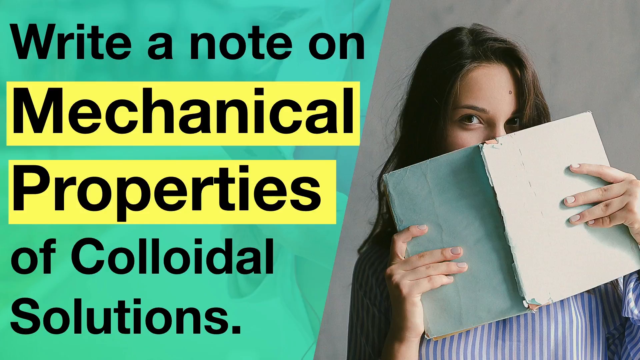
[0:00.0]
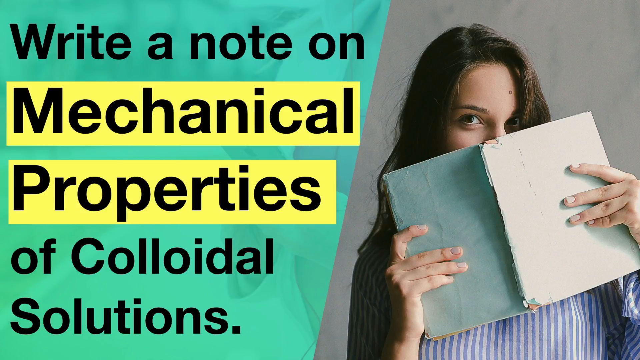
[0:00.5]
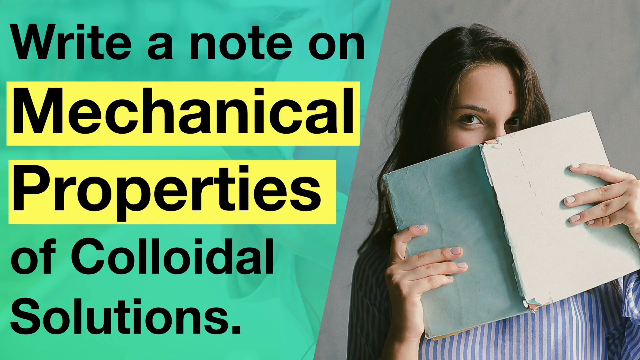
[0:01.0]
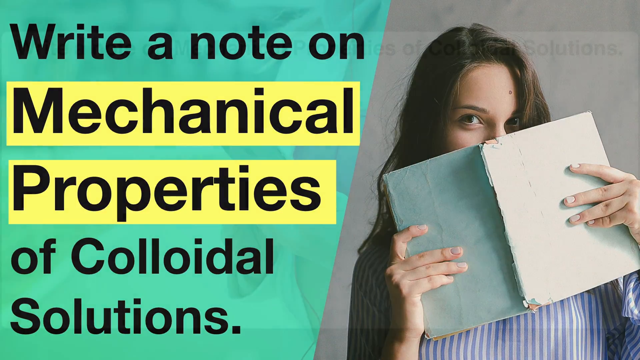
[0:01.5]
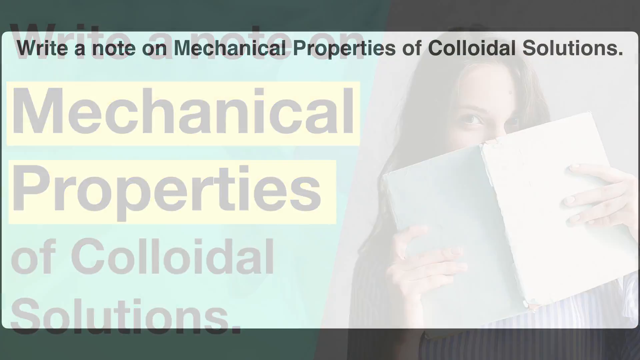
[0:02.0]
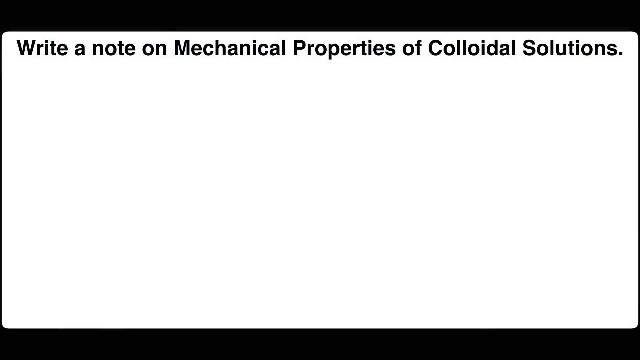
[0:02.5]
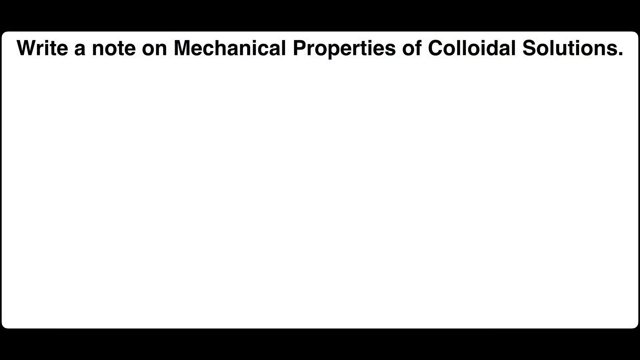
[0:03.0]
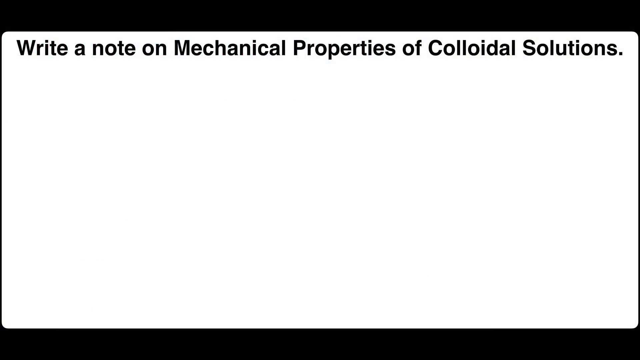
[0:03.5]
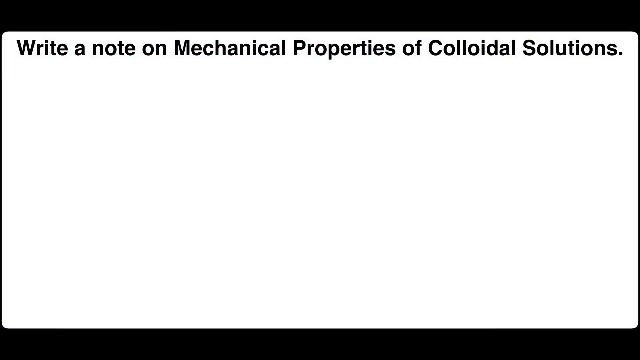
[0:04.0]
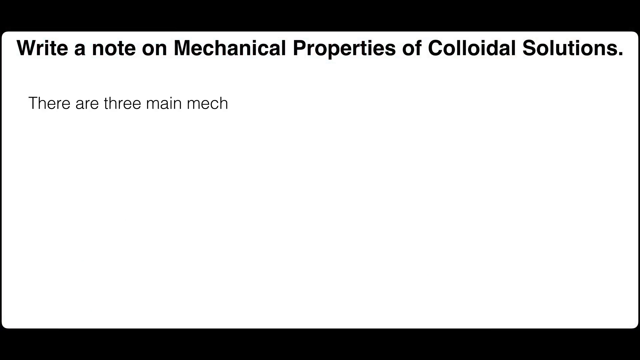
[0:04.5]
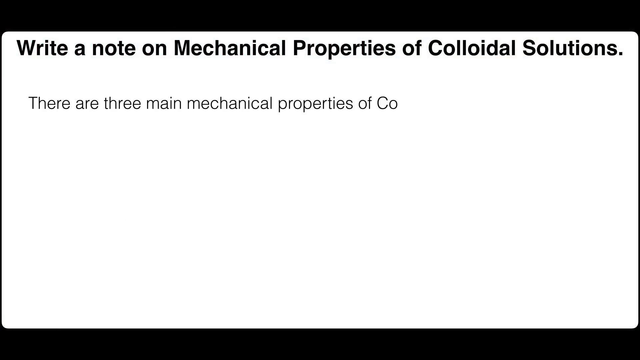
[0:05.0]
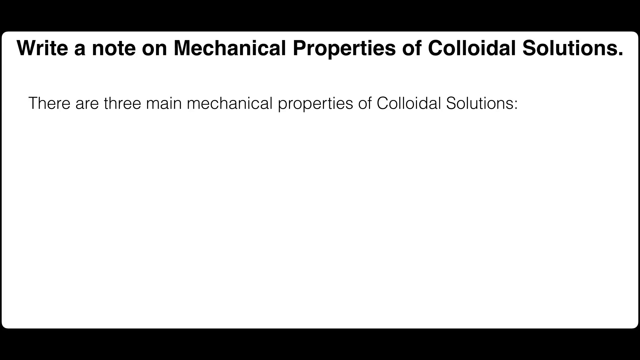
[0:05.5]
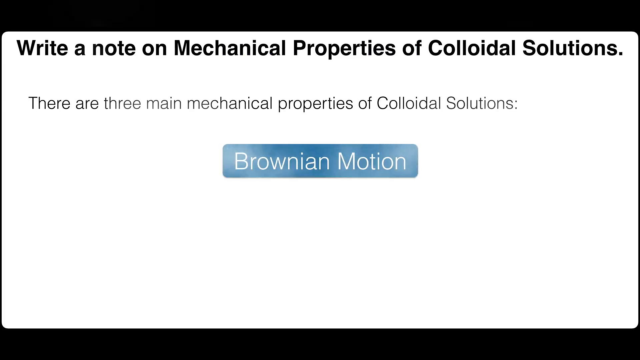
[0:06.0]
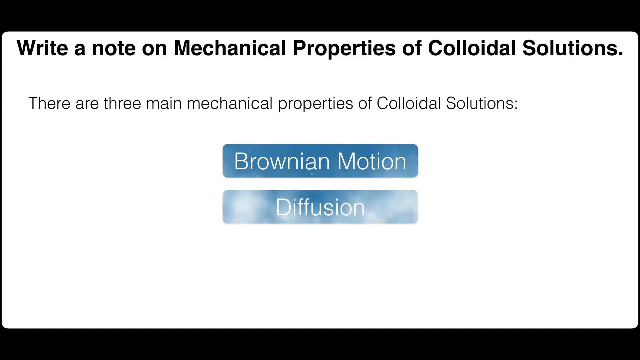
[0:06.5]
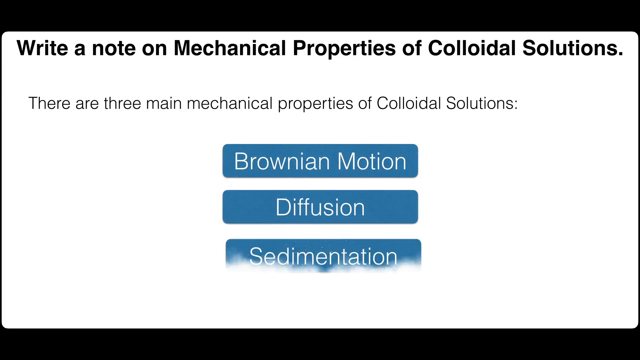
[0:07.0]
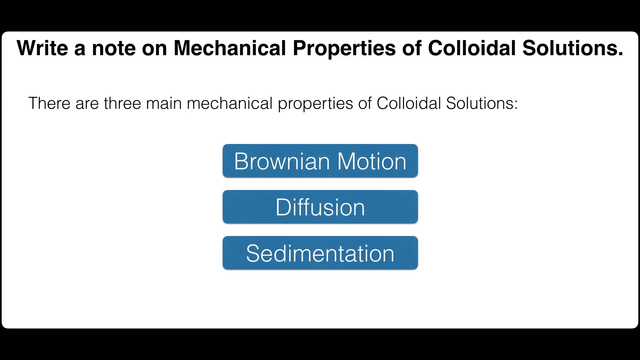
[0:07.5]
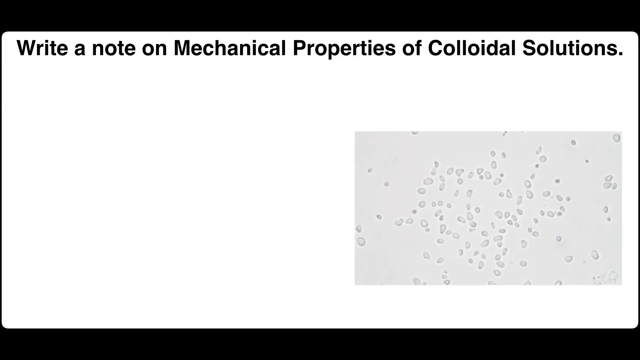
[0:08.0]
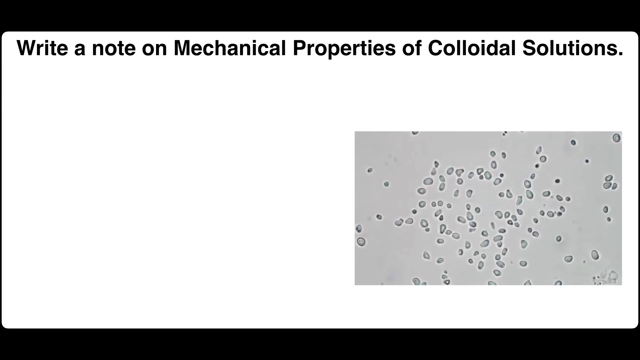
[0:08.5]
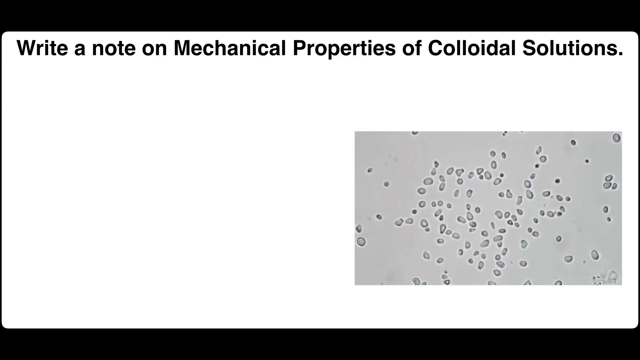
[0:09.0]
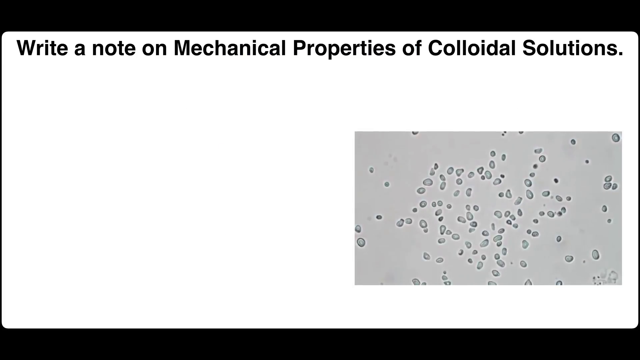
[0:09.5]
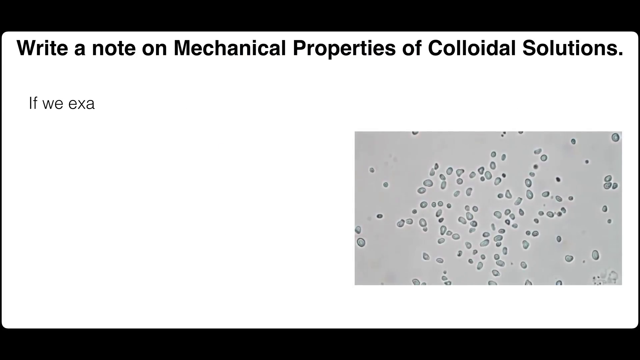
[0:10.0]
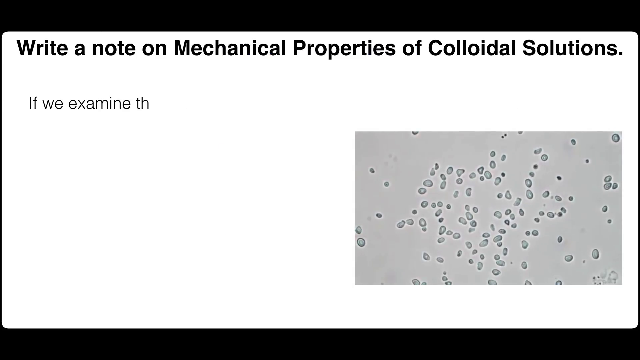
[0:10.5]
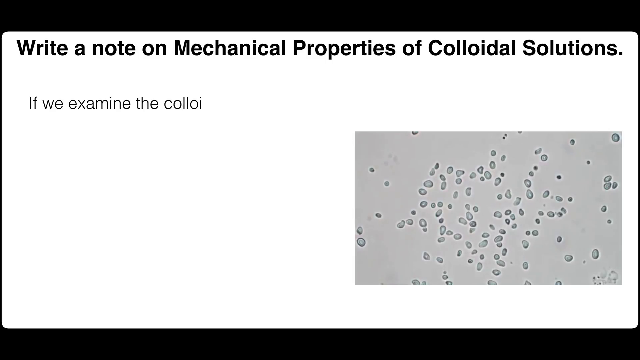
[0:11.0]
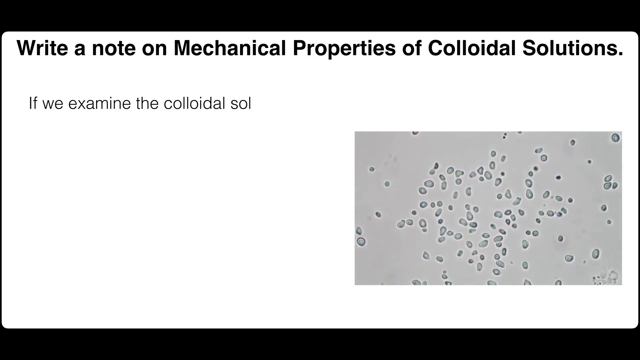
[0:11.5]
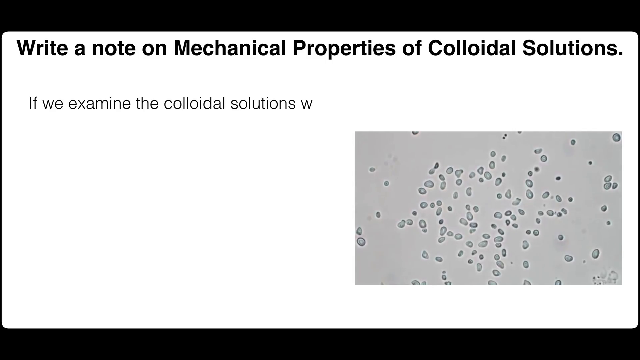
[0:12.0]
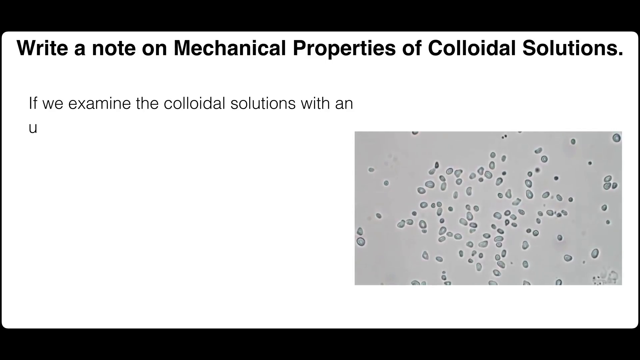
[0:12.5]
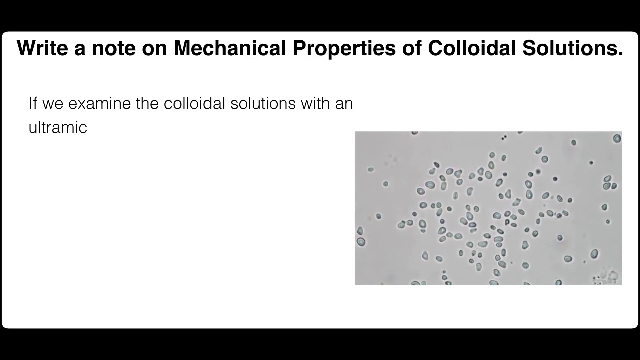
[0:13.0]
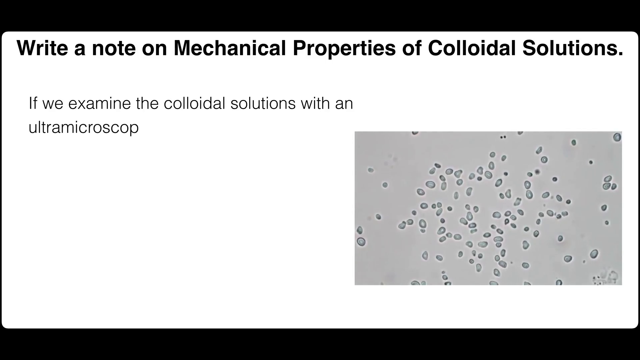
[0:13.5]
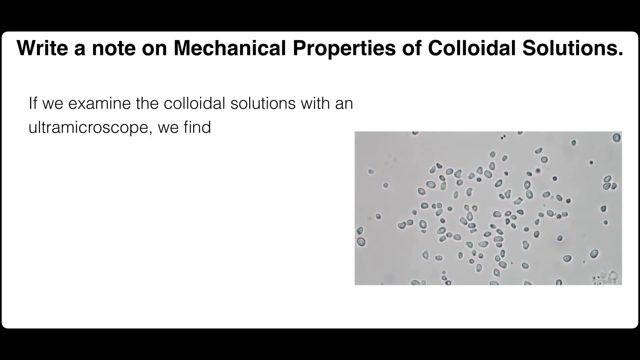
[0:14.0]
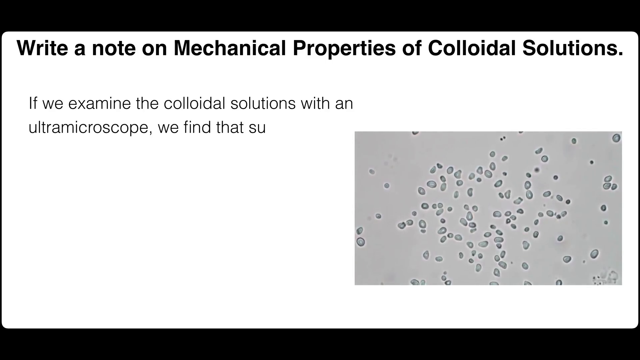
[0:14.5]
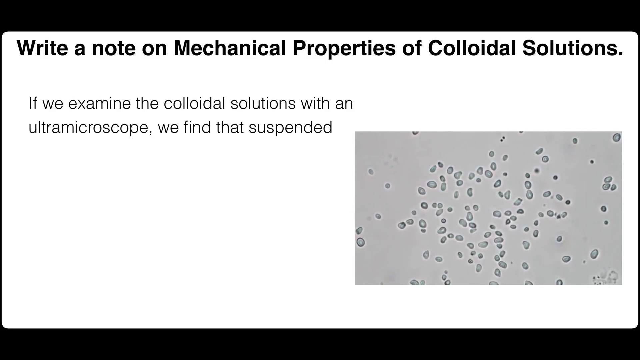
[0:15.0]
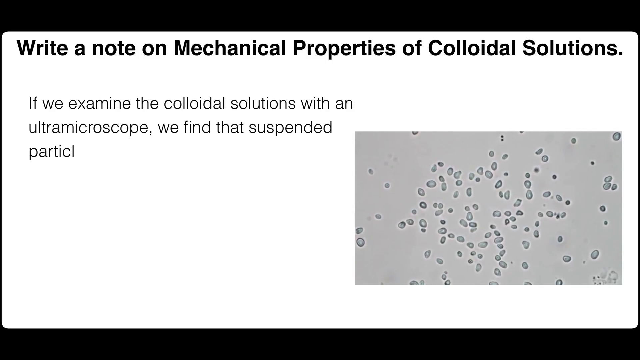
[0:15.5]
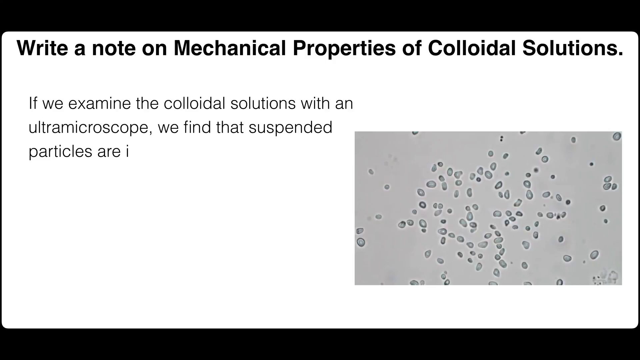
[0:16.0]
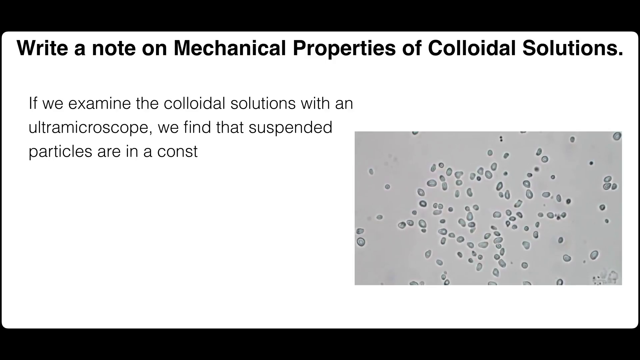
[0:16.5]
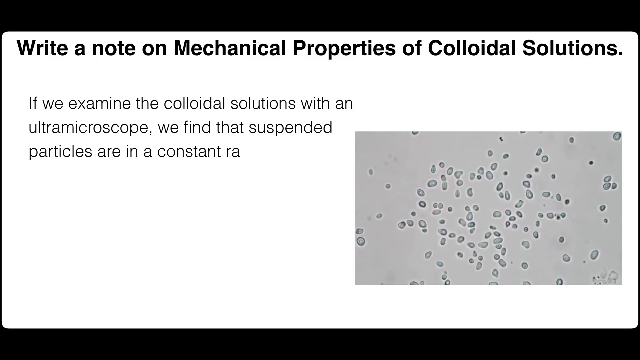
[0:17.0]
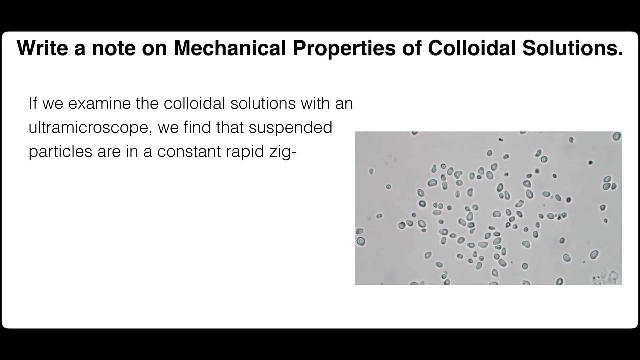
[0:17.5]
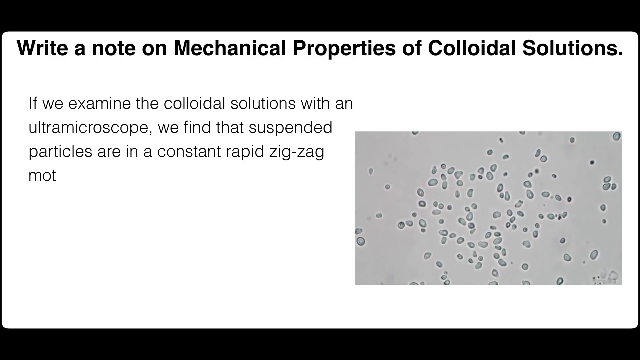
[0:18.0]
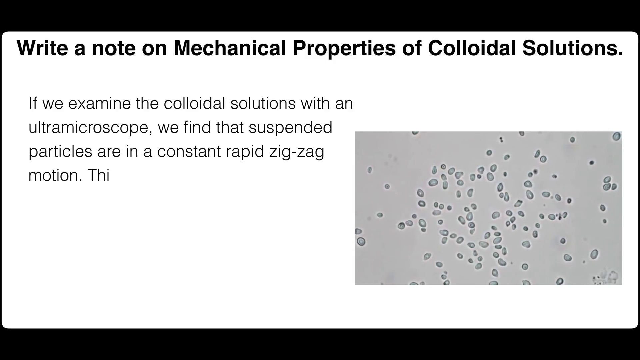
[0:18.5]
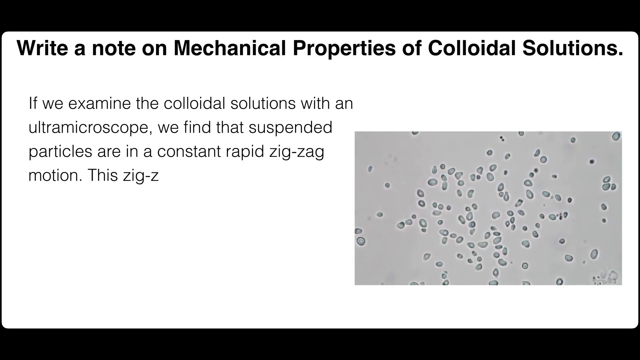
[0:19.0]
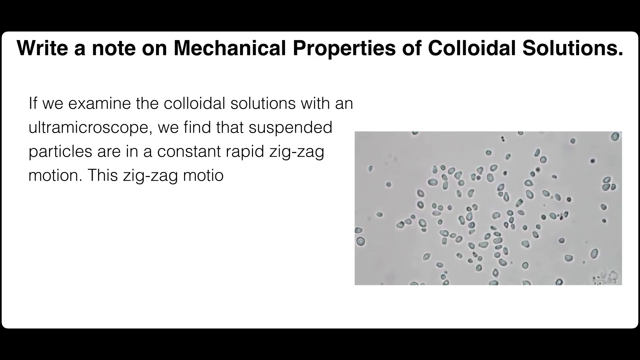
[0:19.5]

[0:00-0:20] A slide shows a white, slim woman with long black hair on its right side. She wears a blue and white striped shirt and holds an open book that covers her nose and mouth. On the left side of the slide, on a green background, is the text "write a note on mechanical properties for colloidal solutions". The presentation then shows three properties of colloidal clay: Brownian motion, diffusion and sedimentation.